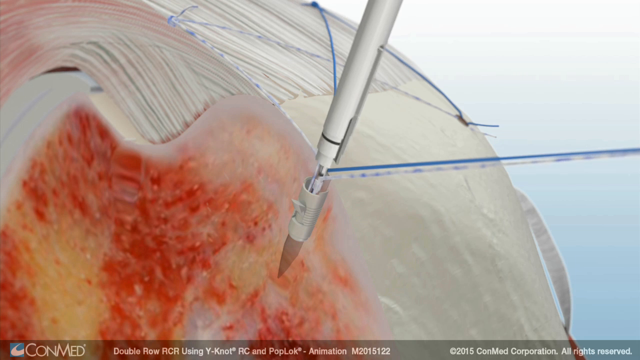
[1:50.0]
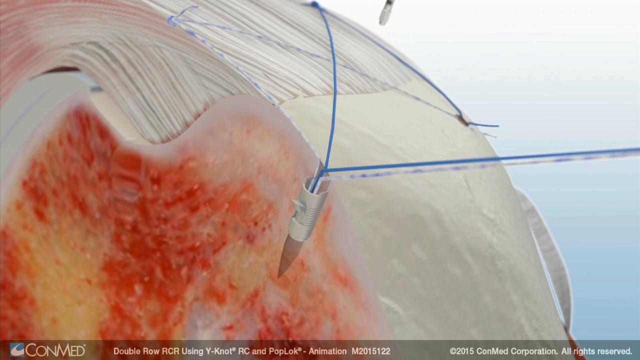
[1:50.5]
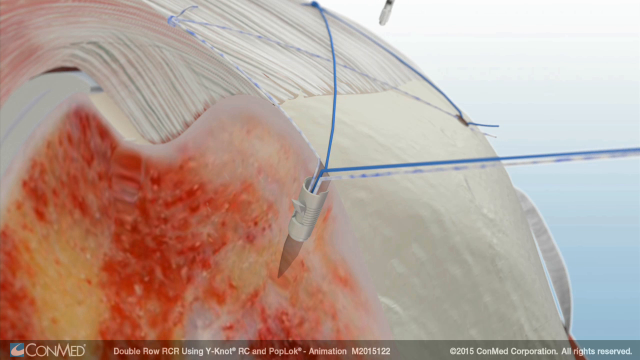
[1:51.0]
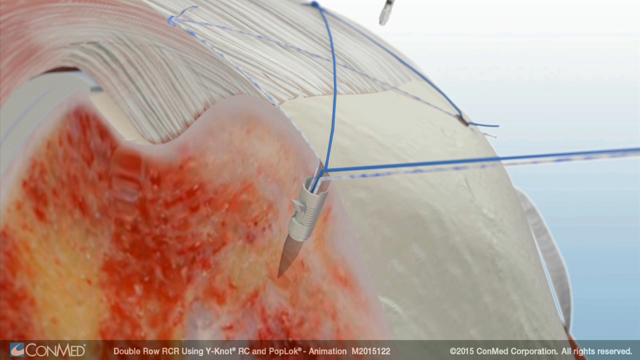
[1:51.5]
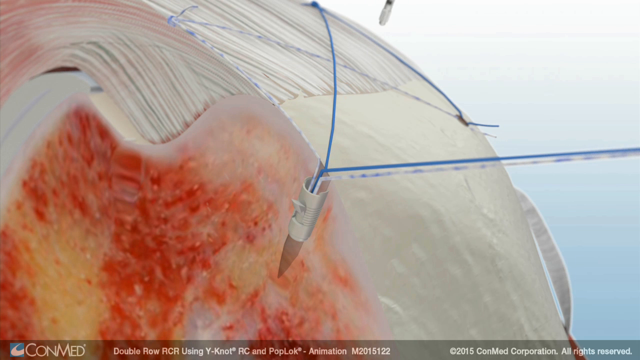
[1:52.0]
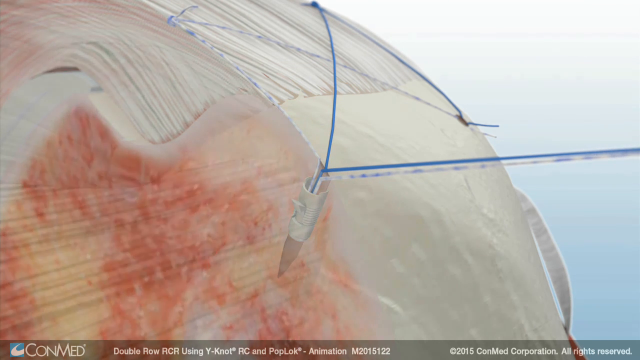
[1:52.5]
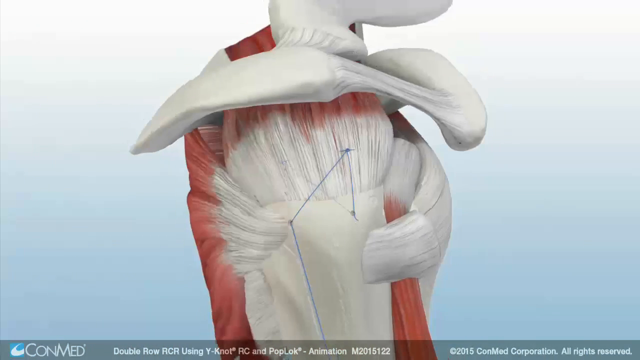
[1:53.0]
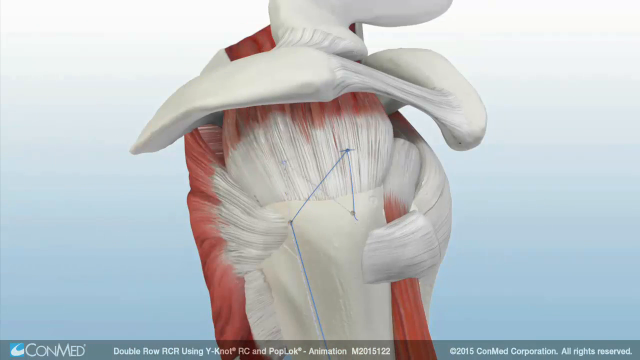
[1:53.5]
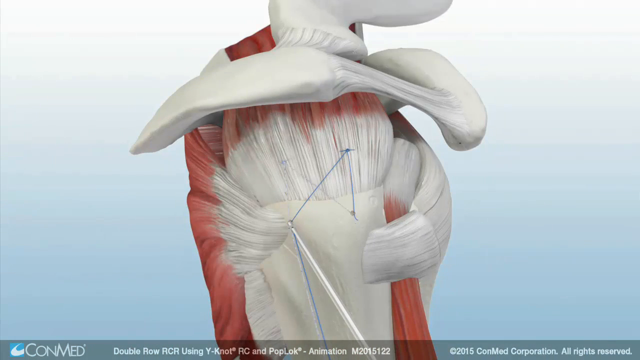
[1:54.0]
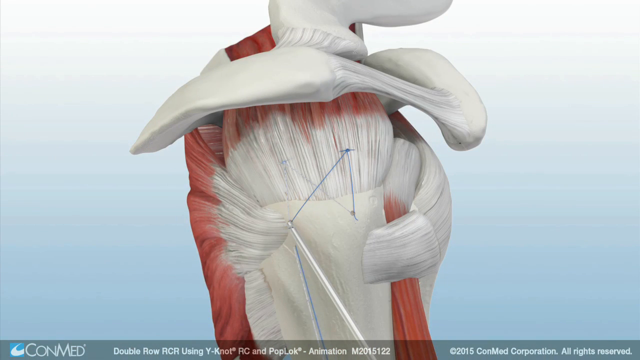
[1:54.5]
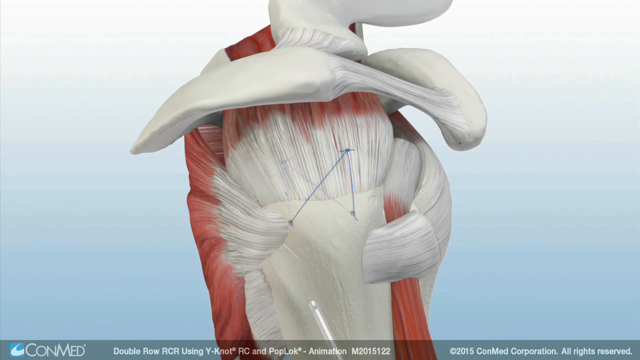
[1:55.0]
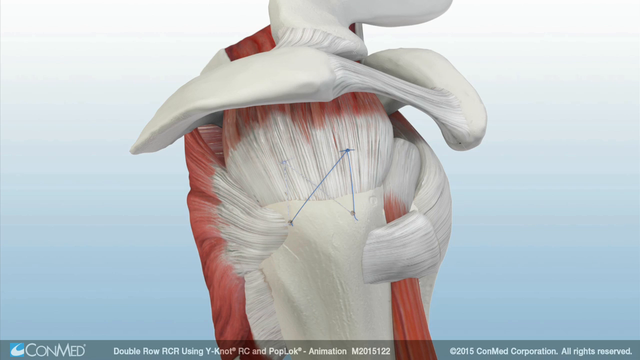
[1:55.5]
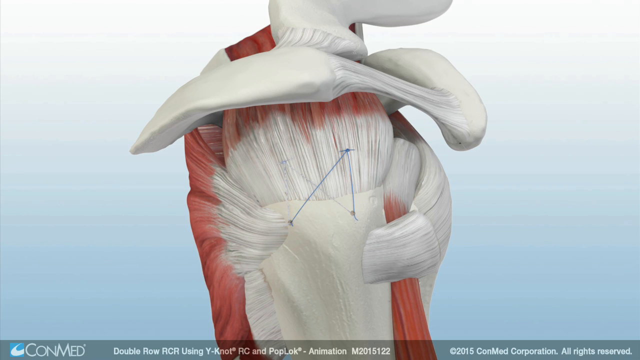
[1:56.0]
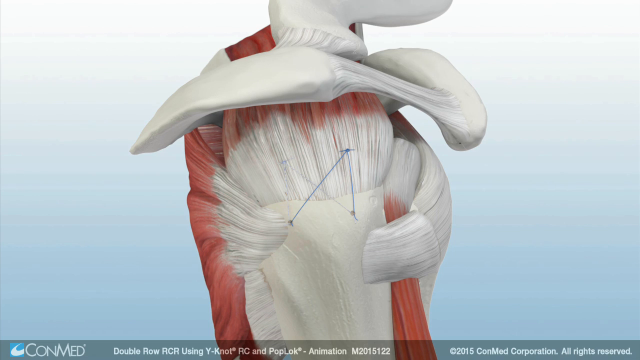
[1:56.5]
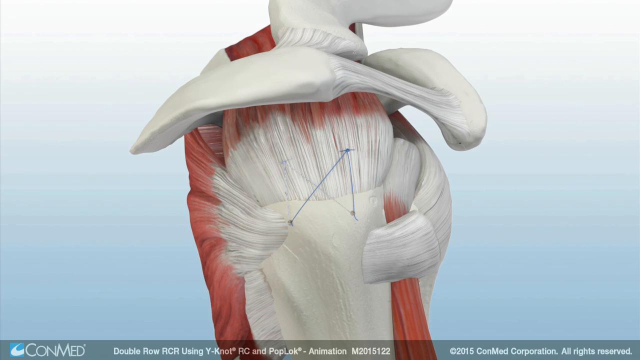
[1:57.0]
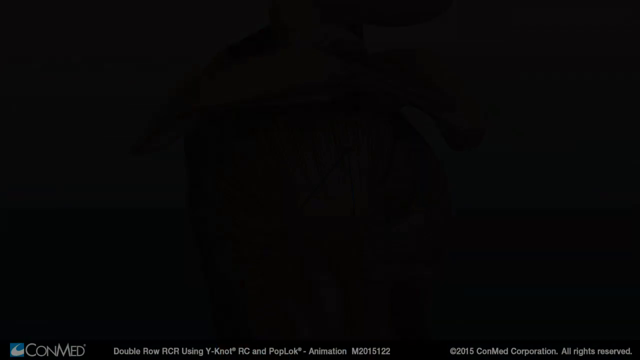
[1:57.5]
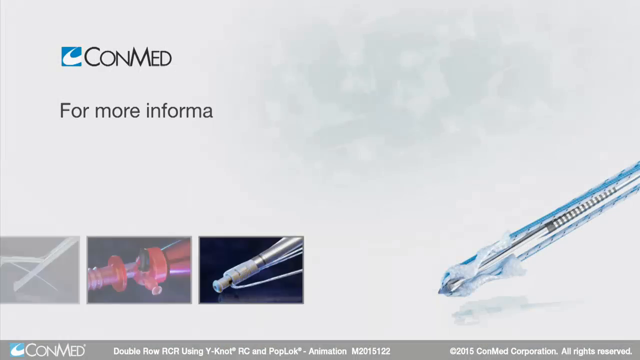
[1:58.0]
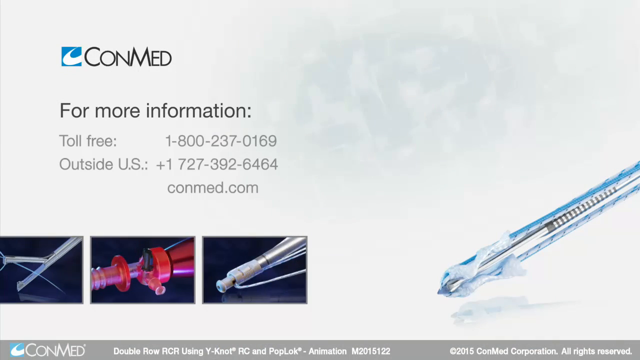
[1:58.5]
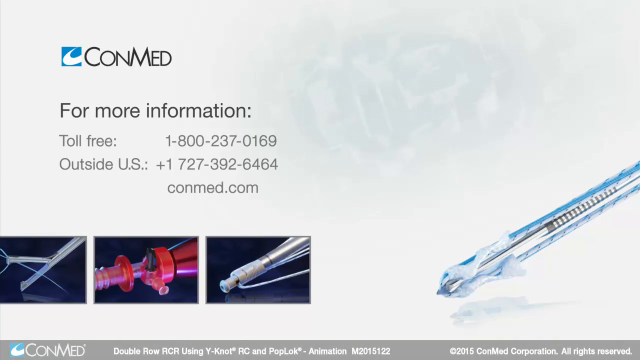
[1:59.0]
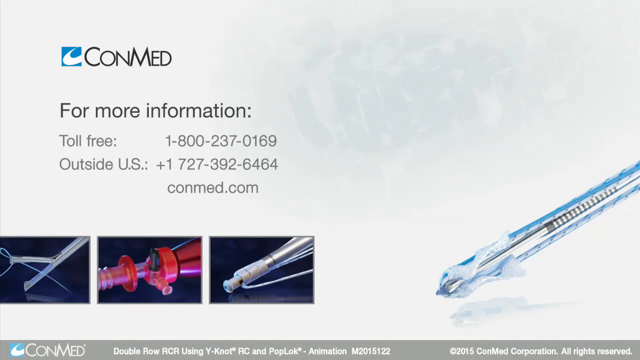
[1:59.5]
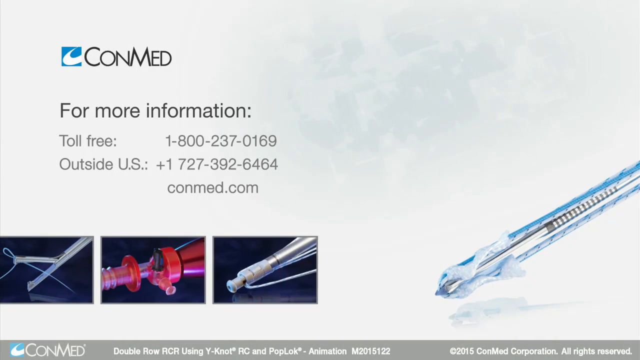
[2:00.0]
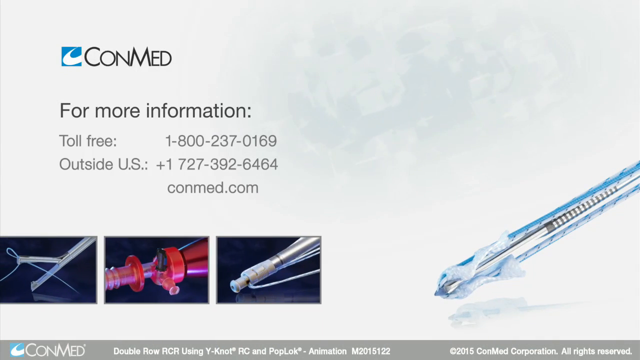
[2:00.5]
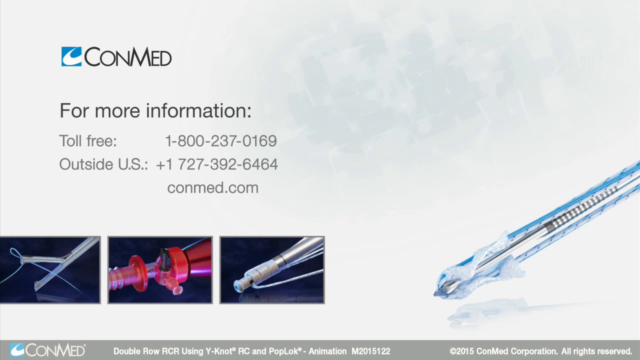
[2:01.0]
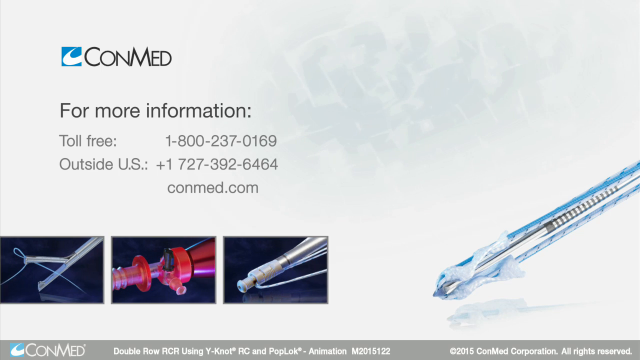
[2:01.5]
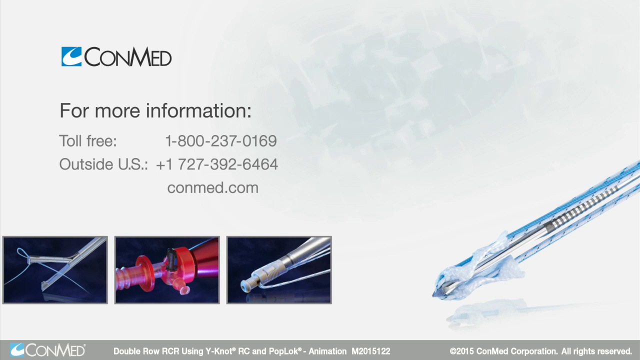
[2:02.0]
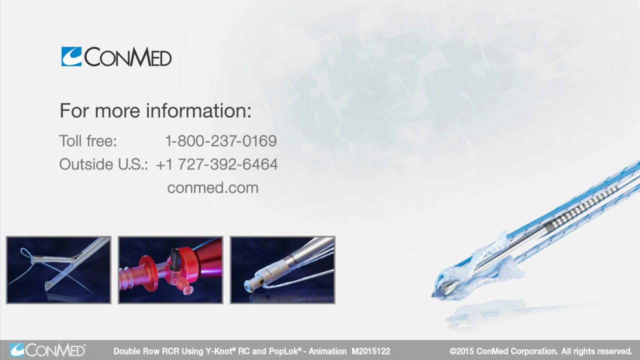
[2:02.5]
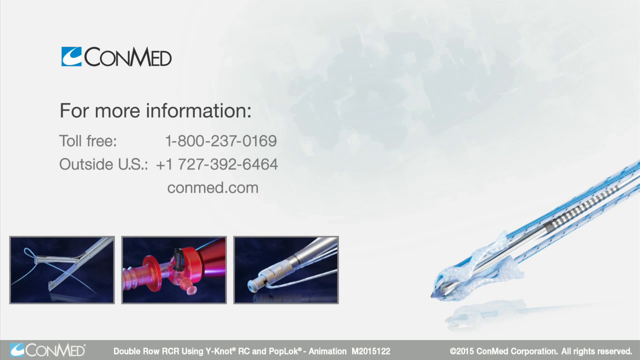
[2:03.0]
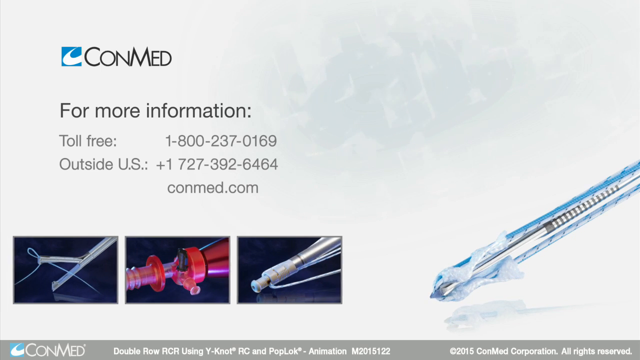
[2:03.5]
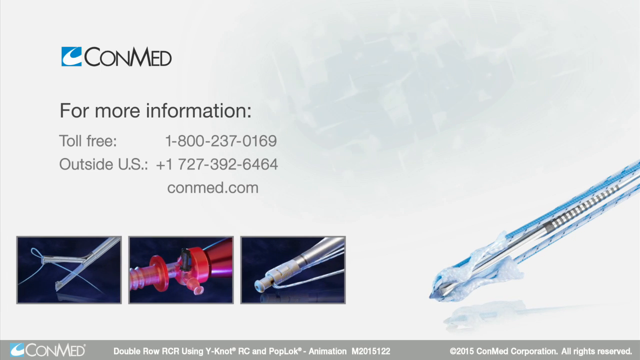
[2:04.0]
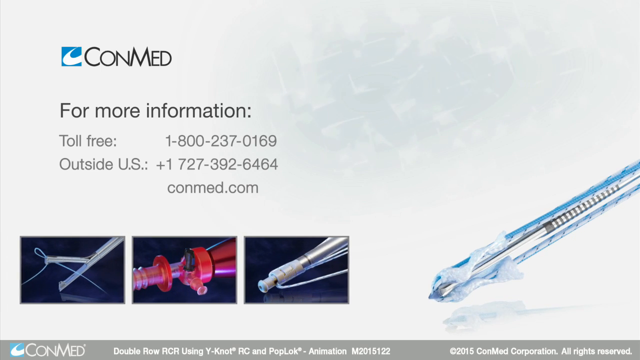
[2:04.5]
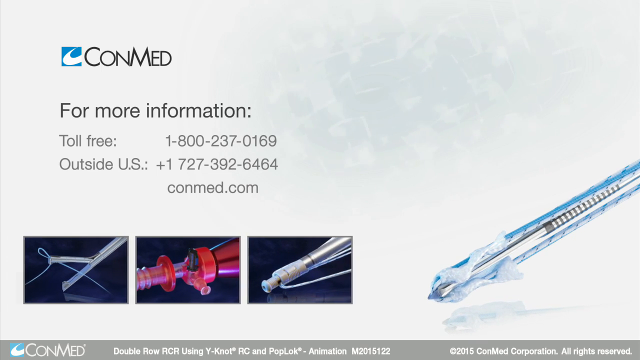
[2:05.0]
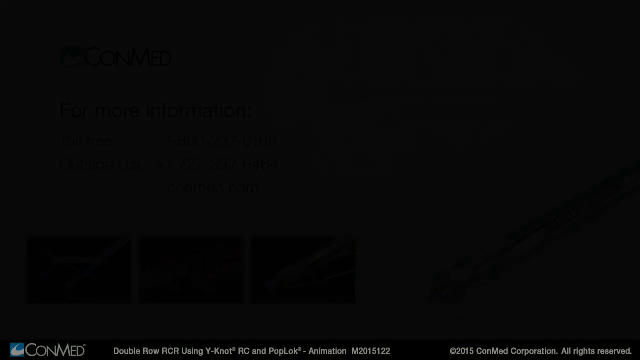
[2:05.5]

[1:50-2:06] An animated demonstration shows a surgical procedure on a human shoulder ball and socket bone, apparently repairing the tendons. An instrument drills a hole into the shoulder bone, and surgical thread comes out of the hole. The view then changes angle to a side view of the exposed shoulder bone, tendons and muscles, and the upper arm onto which the tendons are being sutured. The blue surgical thread is visible, with three points where it has been drilled into the upper arm bone to hold the tendons in place. The animation then disappears and a closing screen appears, showing the name of the medical device maker, CONMED, and below it "for more information, 1-800-237-0169, outside of US, +1-727-39-6464, CONMED.com." Below that are three images of the surgical instruments side by side.